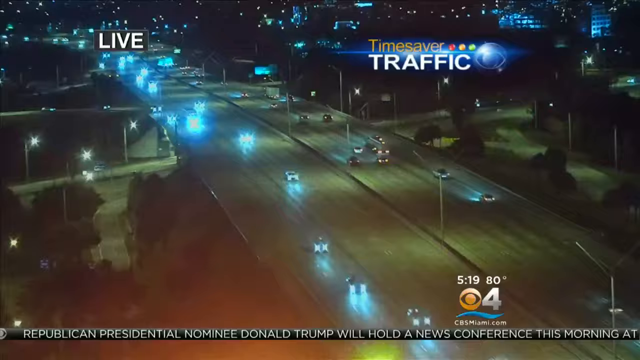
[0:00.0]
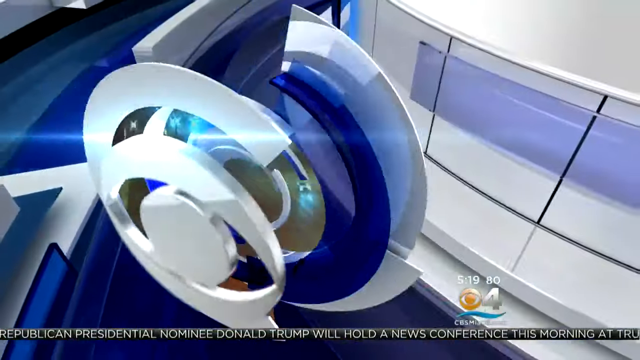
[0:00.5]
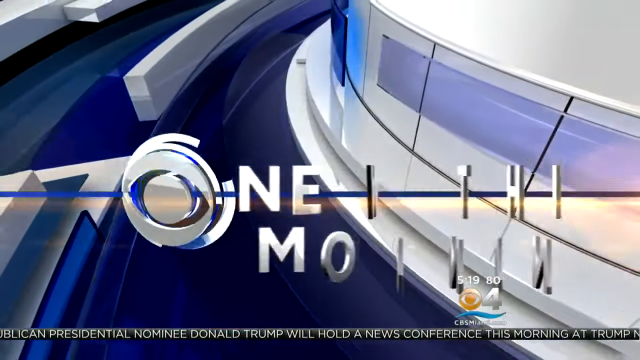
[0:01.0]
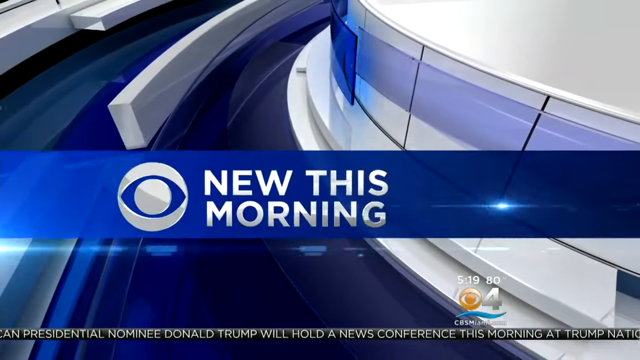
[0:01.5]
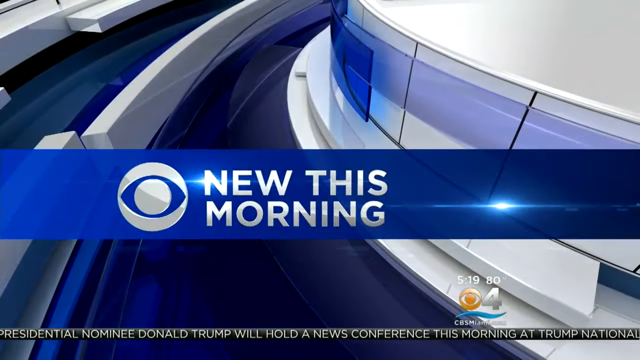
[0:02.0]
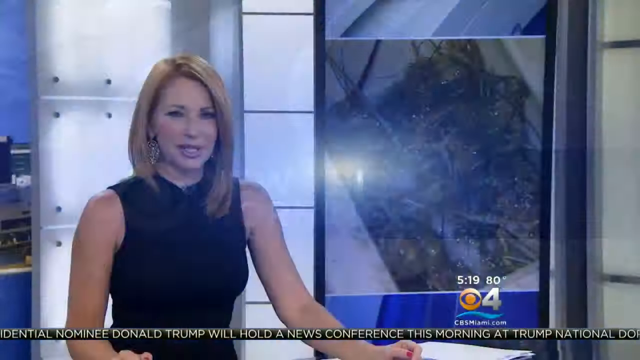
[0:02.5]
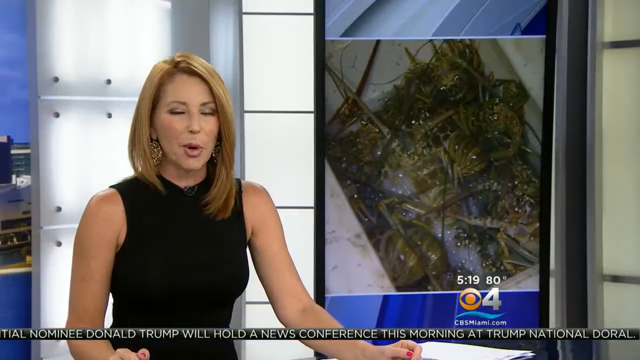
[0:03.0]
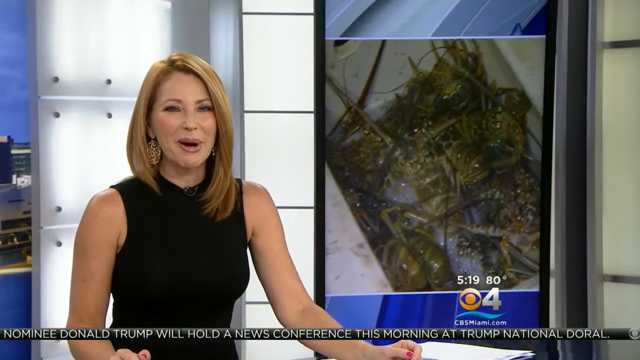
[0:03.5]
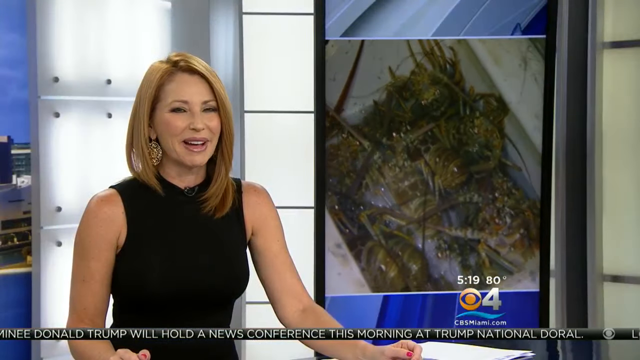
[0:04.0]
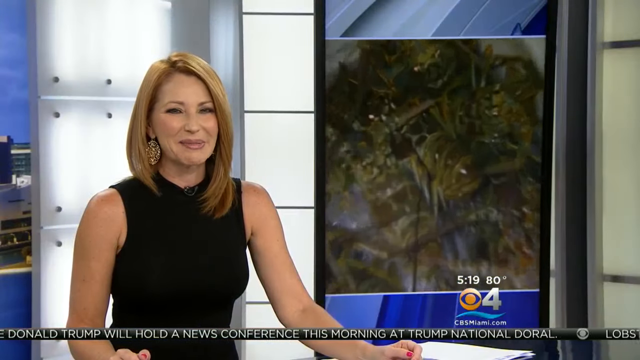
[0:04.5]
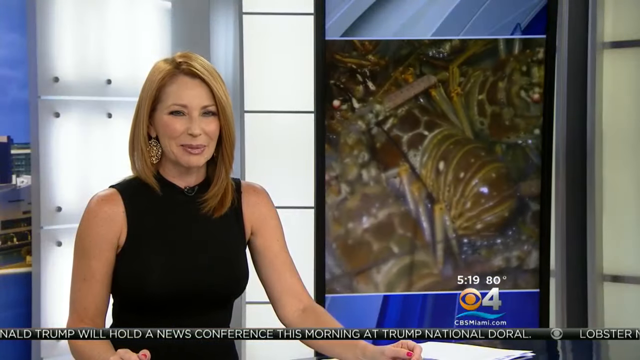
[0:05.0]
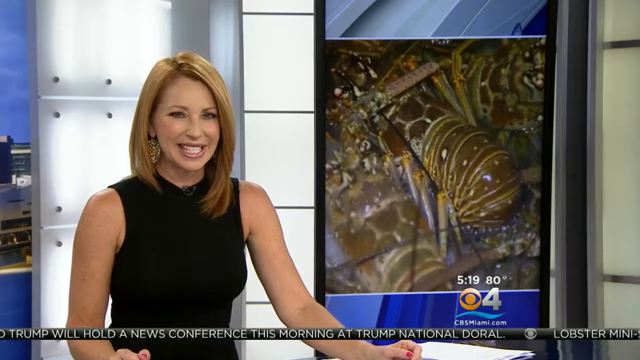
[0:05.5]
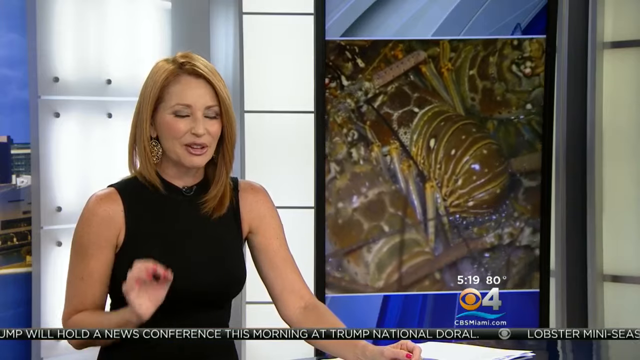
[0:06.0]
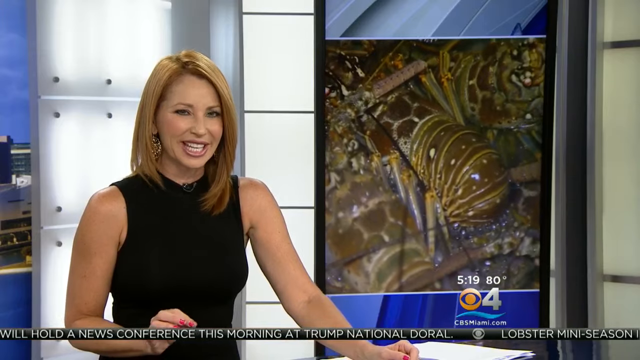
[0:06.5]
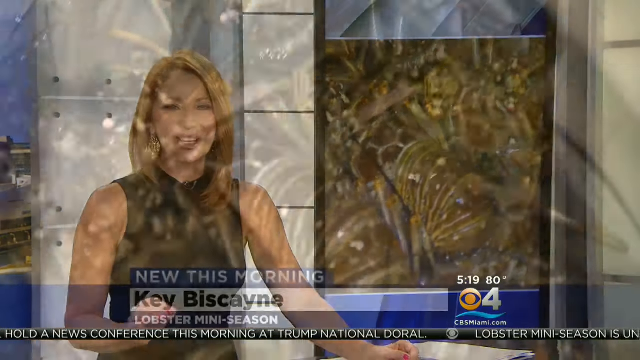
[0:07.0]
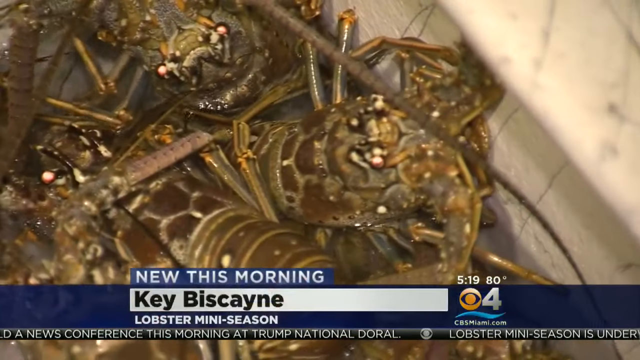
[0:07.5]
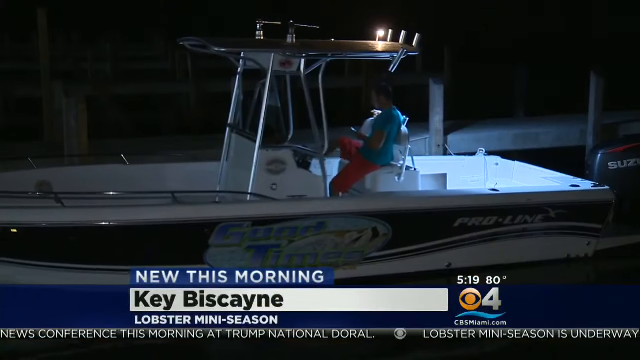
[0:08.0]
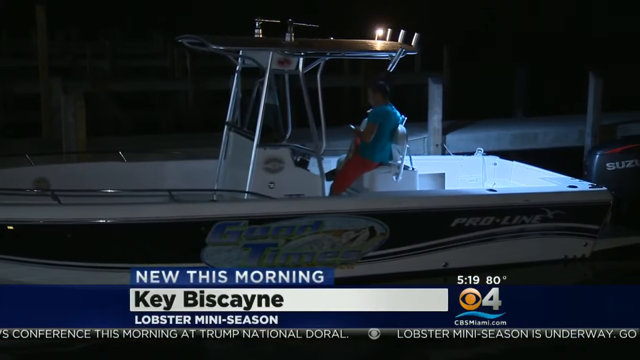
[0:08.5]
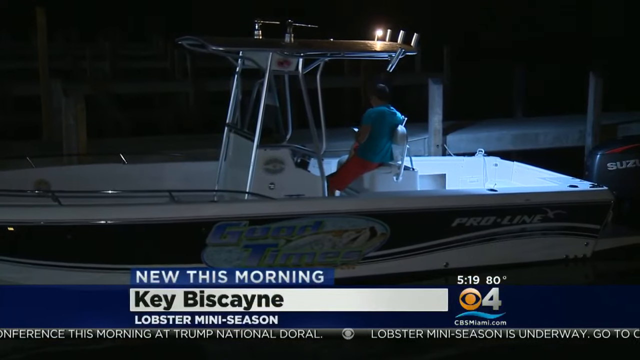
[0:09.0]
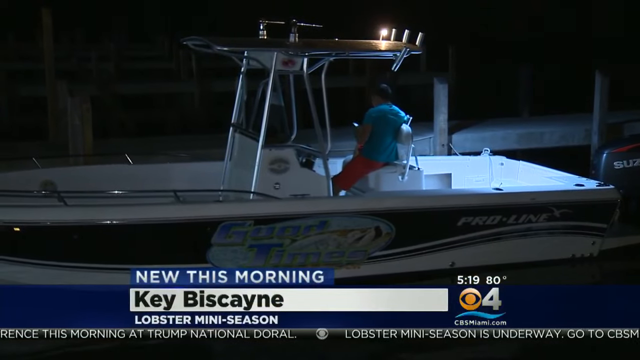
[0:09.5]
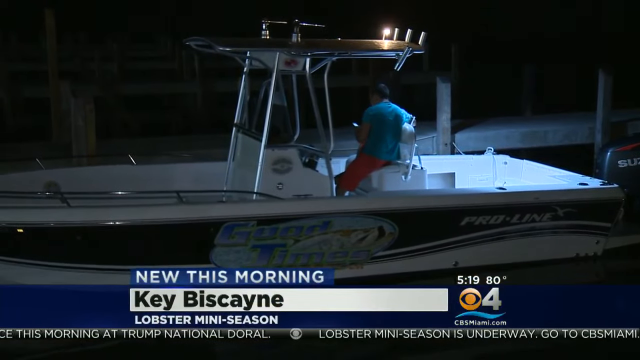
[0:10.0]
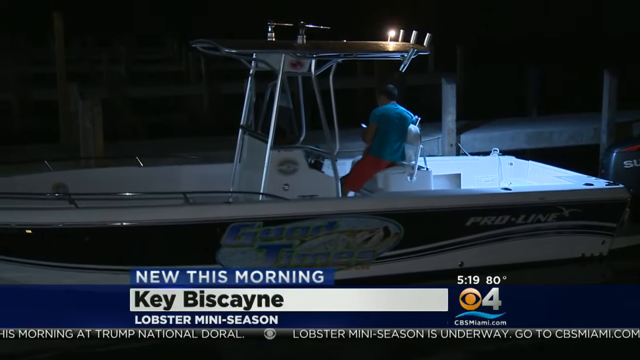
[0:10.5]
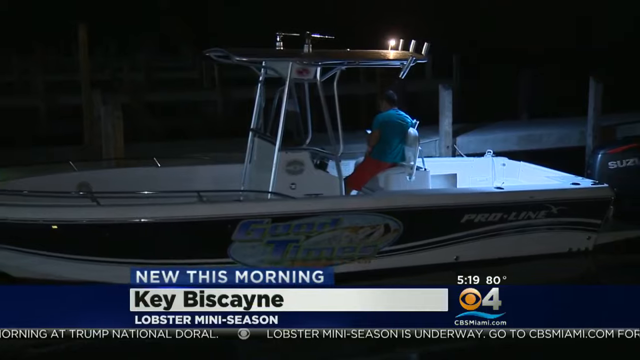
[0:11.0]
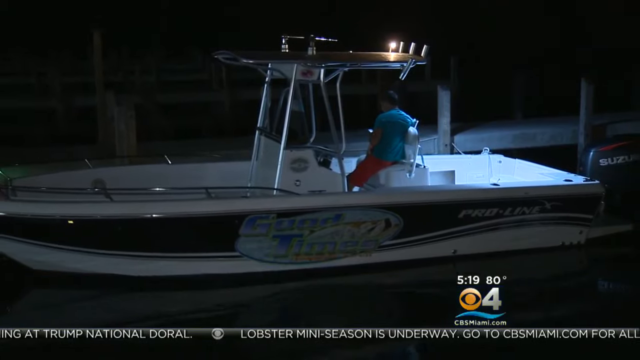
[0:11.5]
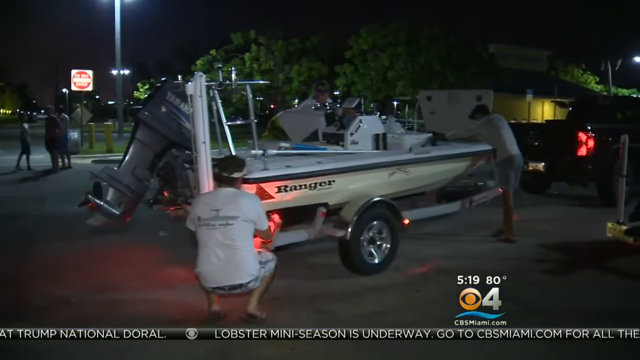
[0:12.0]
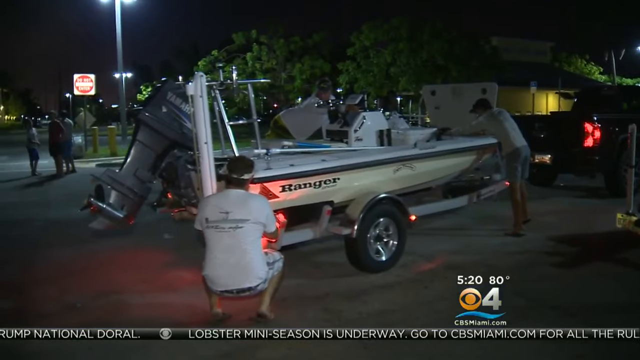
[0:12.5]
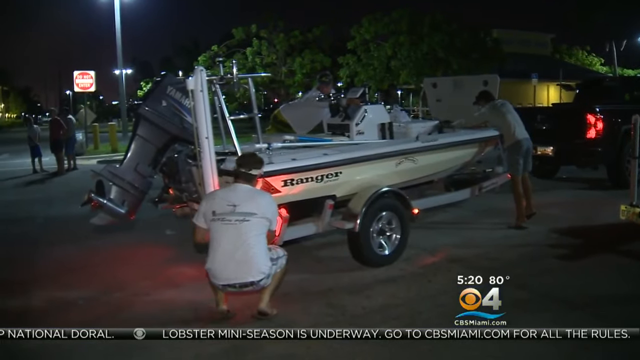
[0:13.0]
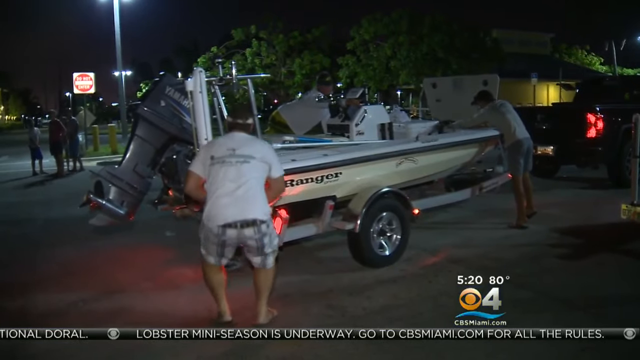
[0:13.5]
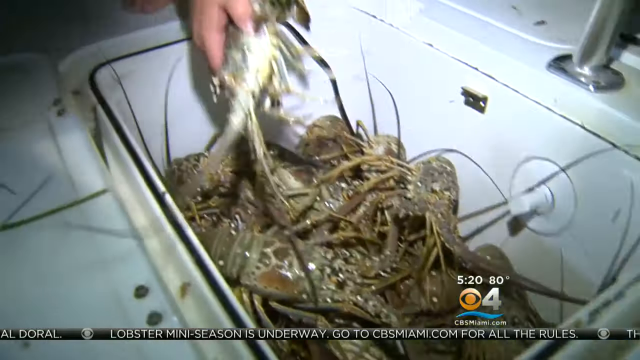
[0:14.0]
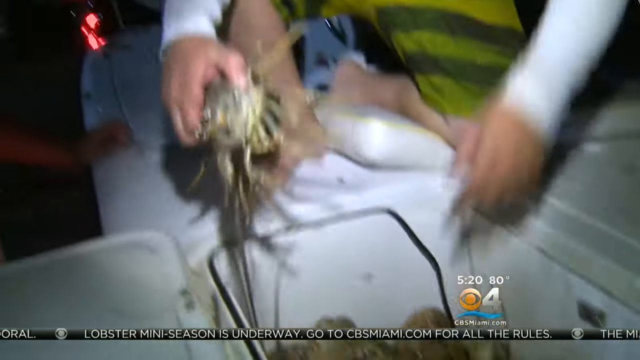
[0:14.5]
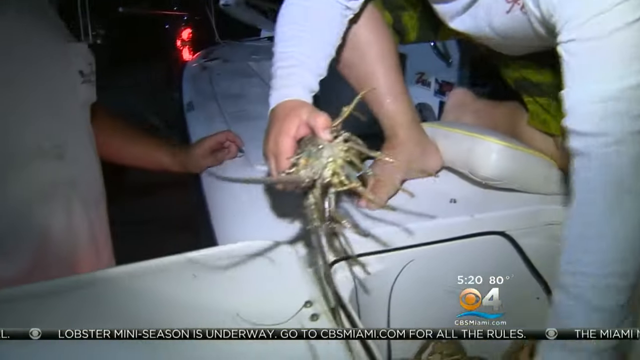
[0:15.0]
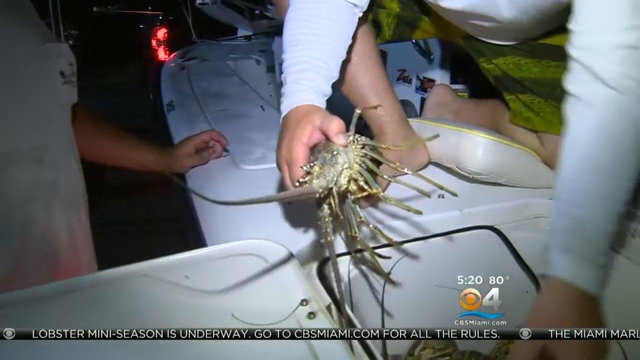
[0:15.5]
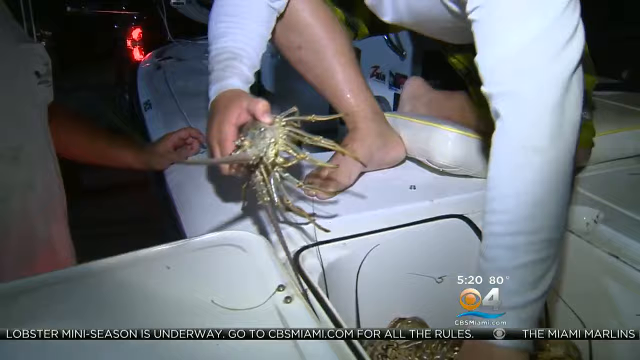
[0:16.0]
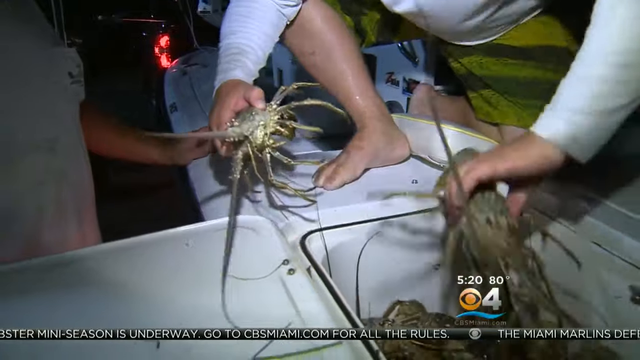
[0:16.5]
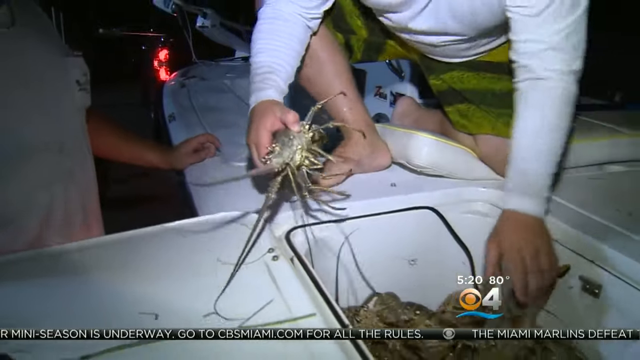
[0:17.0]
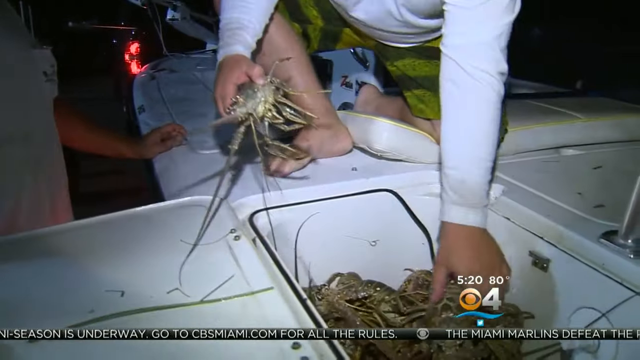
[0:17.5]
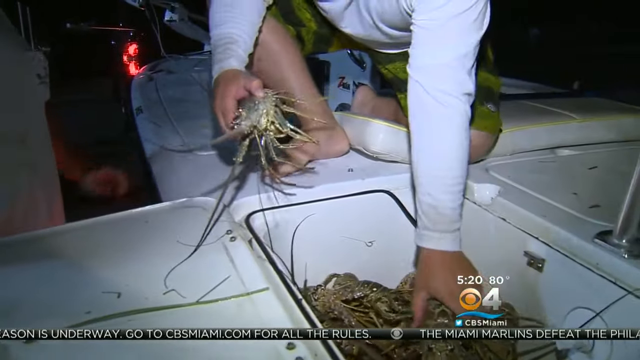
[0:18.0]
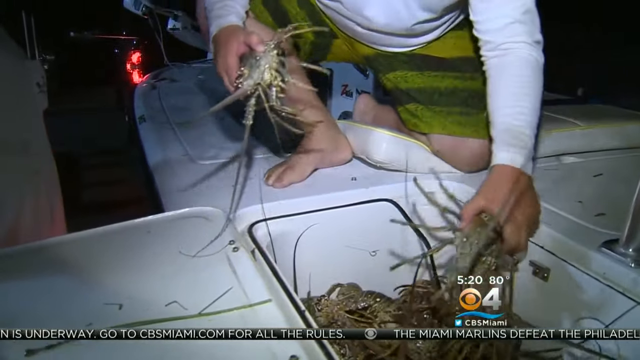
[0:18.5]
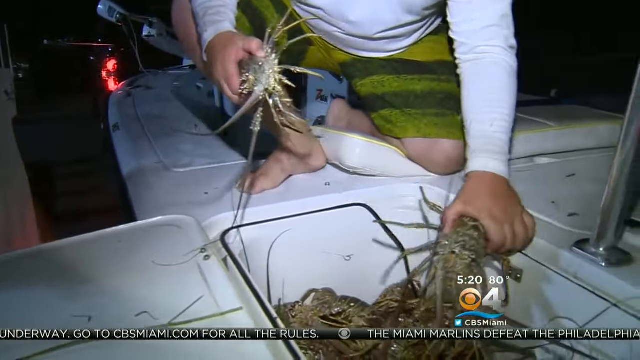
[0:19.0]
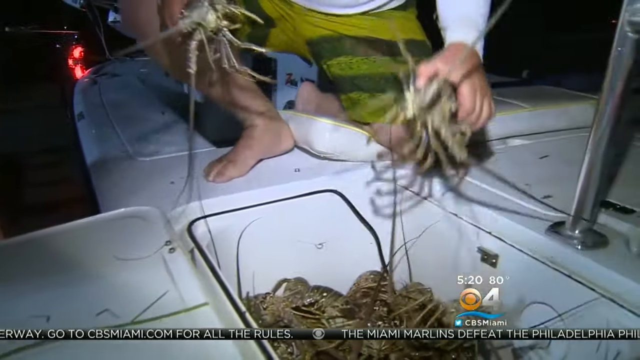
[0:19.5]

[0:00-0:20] Men are busy catching lobsters. One man puts them into a bucket. The men are on a boat out on the ocean, apparently catching the lobsters there, and then they are at home, where another man takes the lobsters and holds them. A female news reporter with blonde hair, wearing a black dress, seems to want to laugh while also looking scared. There are many lobsters in the bucket, and the man handles them without any sign of fear. Text on the TV screen reads "time-saver traffic".